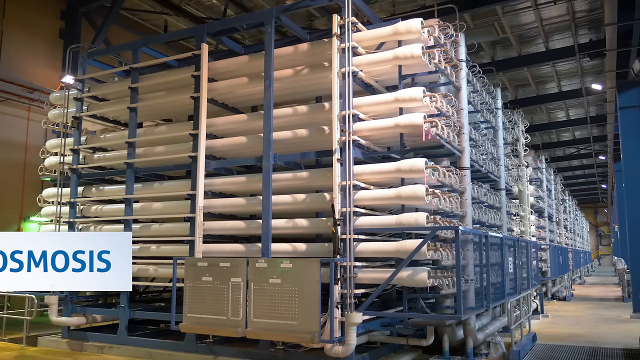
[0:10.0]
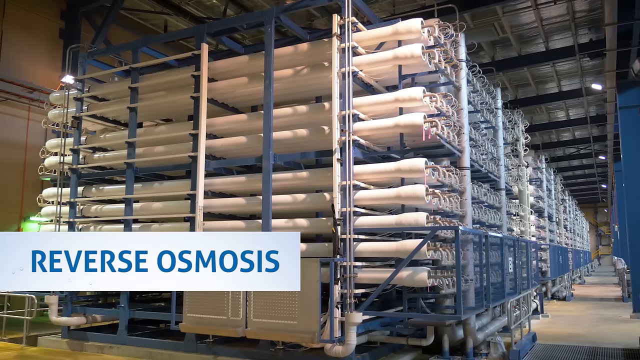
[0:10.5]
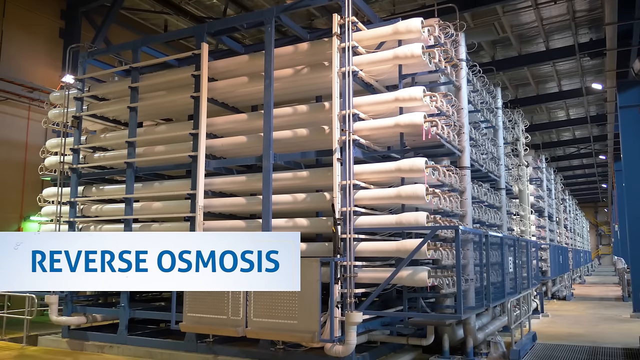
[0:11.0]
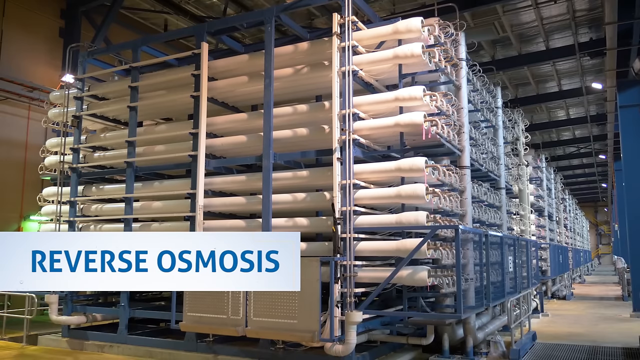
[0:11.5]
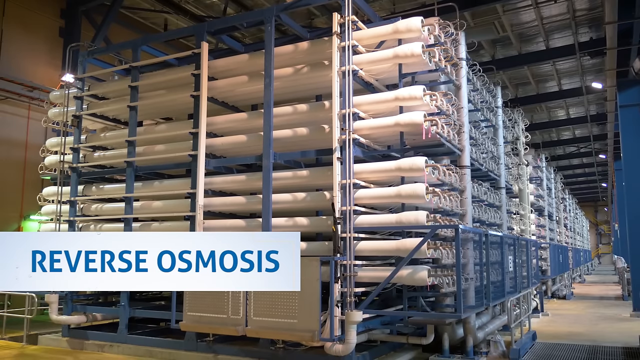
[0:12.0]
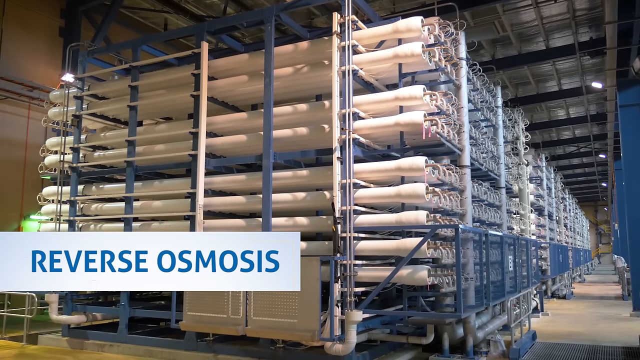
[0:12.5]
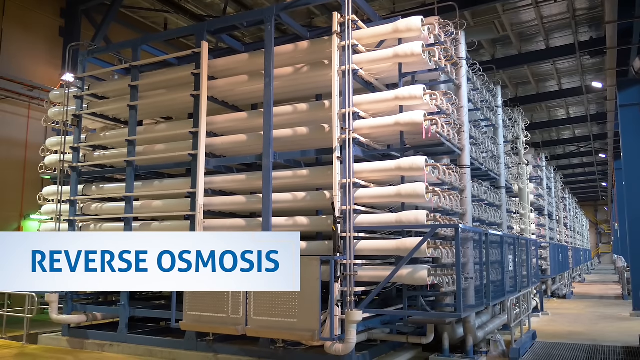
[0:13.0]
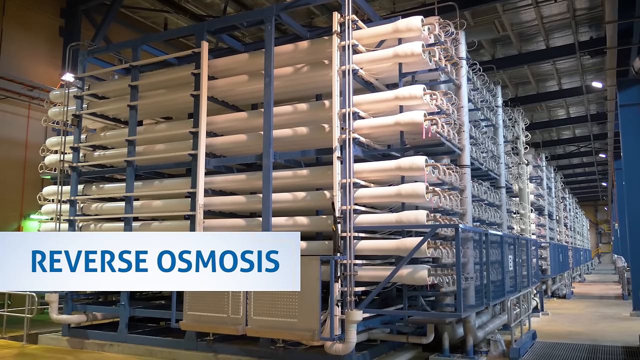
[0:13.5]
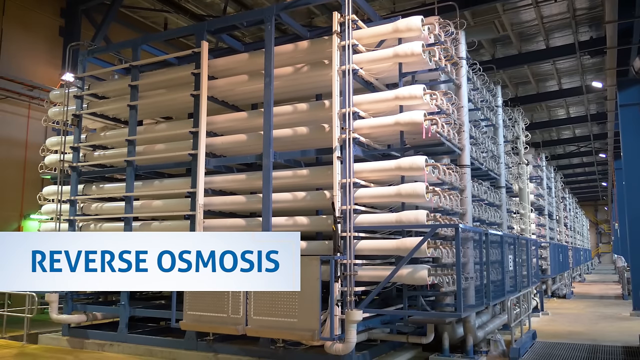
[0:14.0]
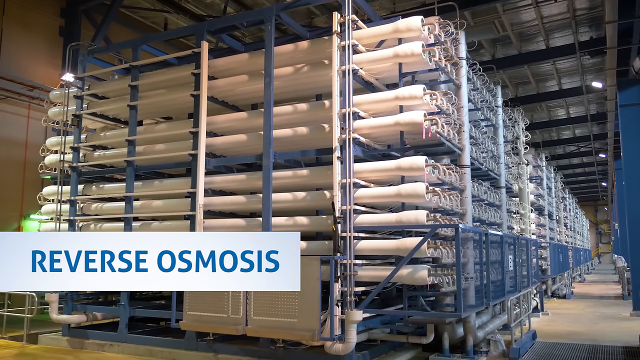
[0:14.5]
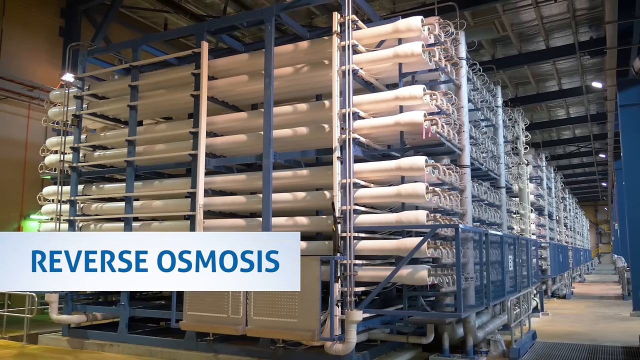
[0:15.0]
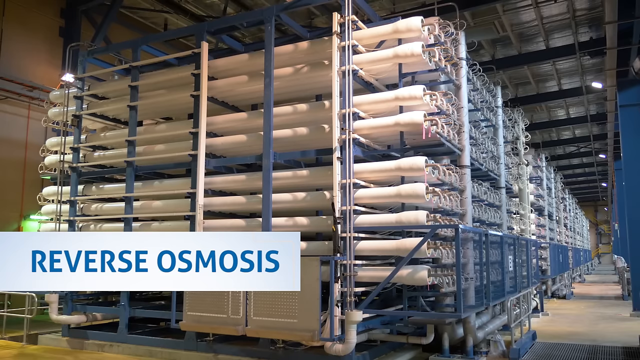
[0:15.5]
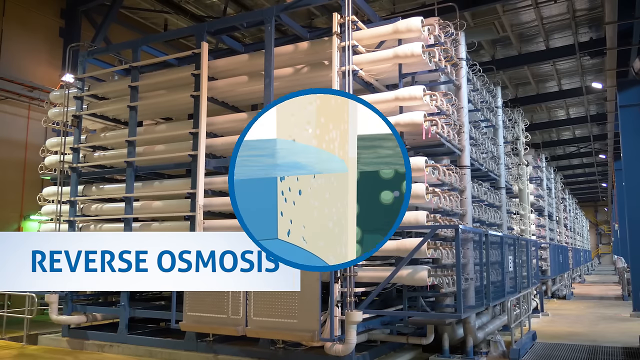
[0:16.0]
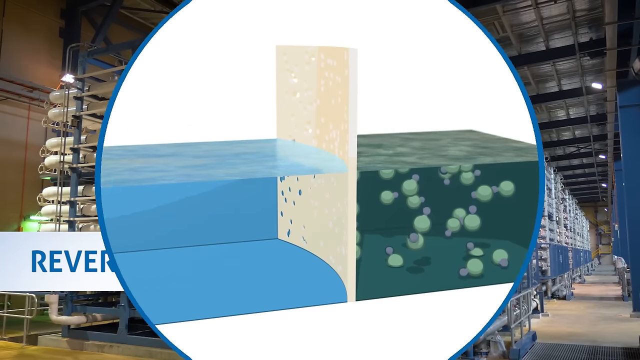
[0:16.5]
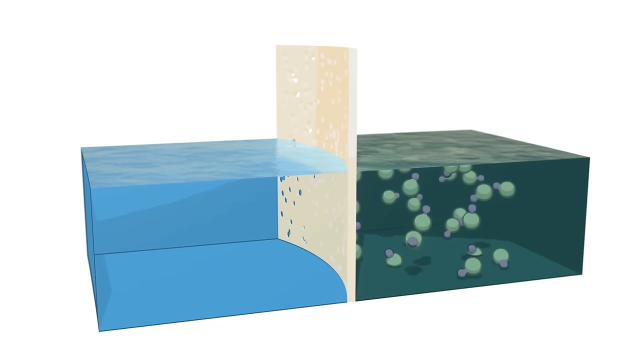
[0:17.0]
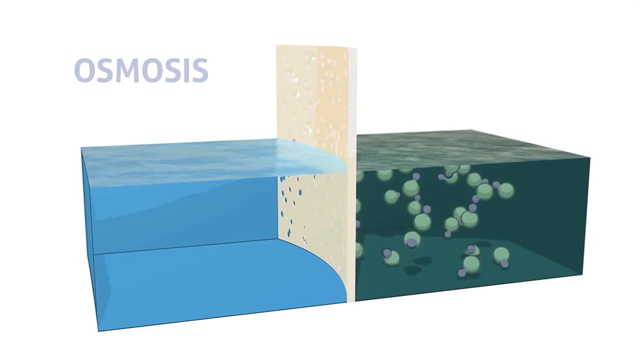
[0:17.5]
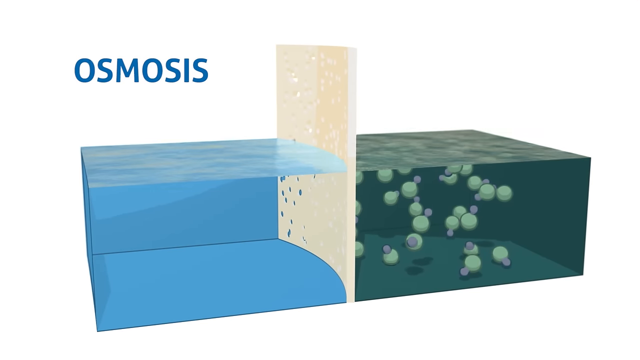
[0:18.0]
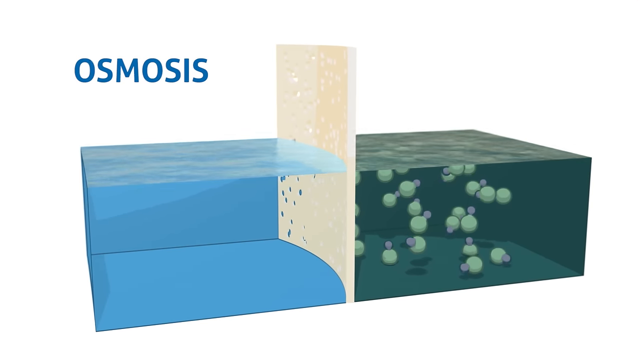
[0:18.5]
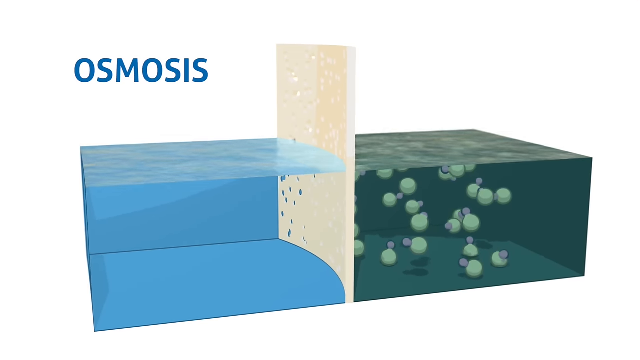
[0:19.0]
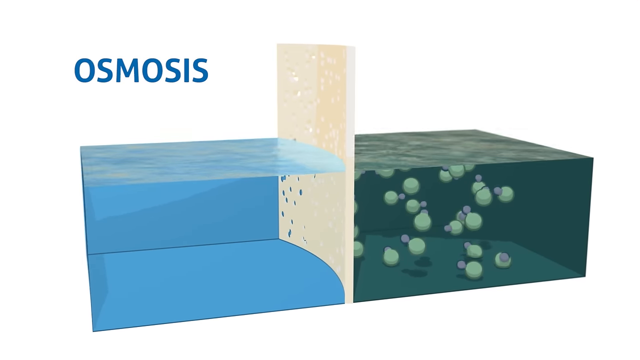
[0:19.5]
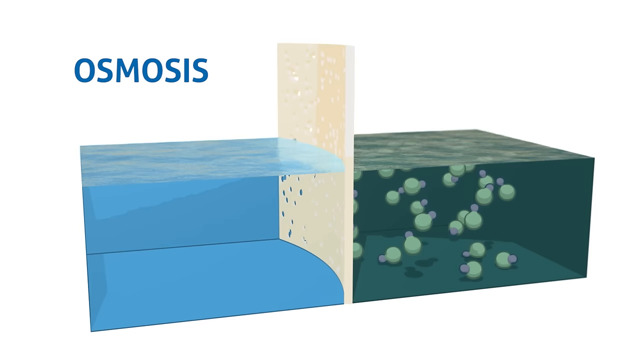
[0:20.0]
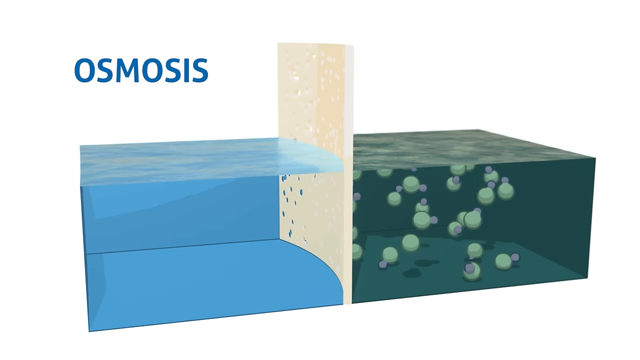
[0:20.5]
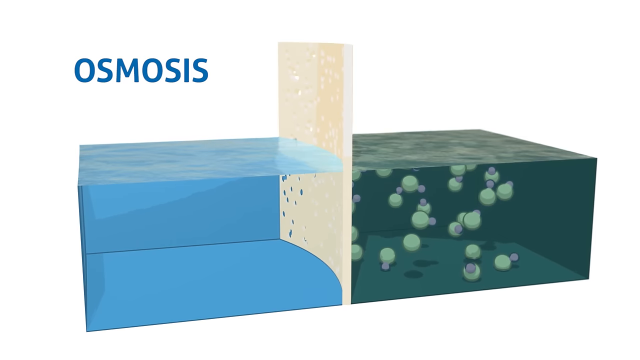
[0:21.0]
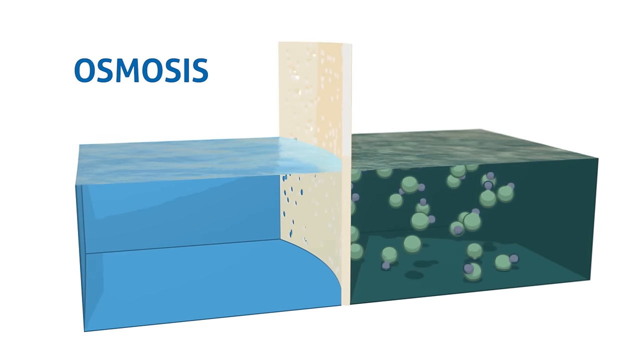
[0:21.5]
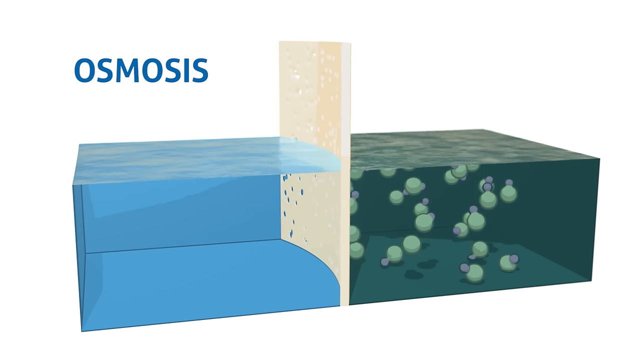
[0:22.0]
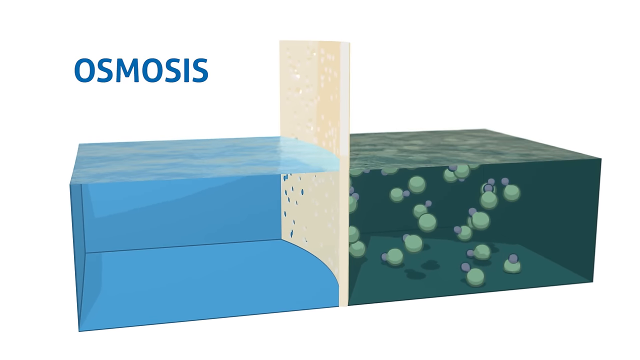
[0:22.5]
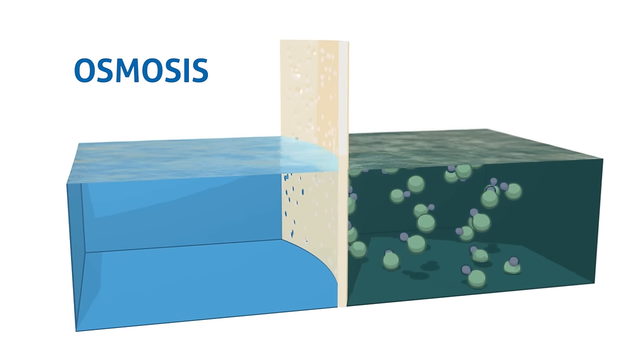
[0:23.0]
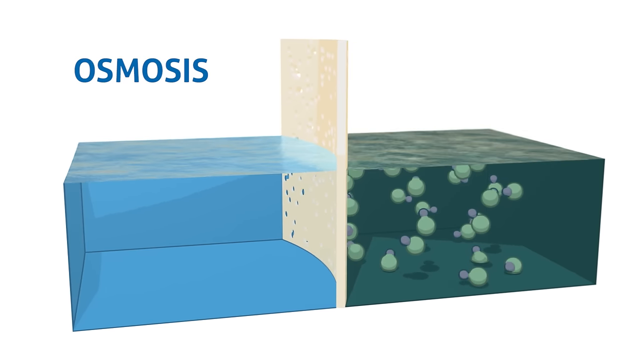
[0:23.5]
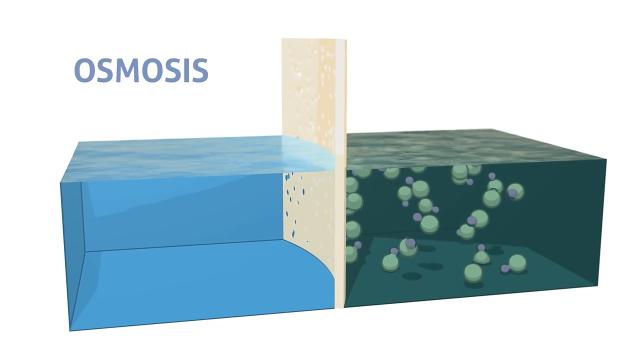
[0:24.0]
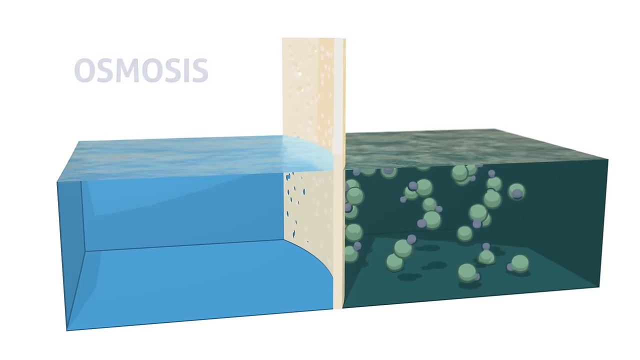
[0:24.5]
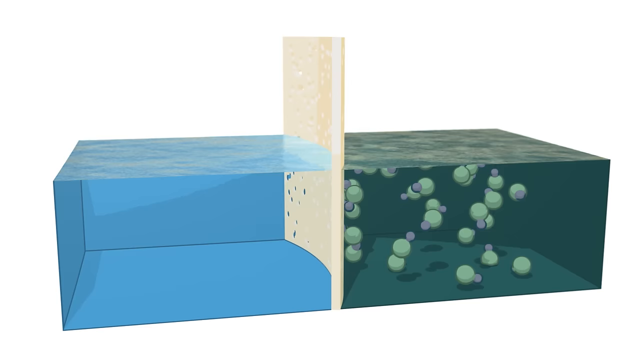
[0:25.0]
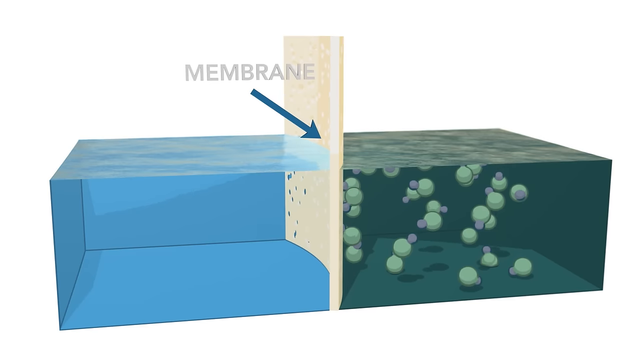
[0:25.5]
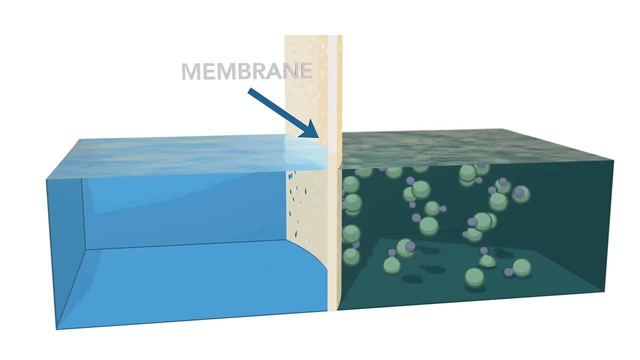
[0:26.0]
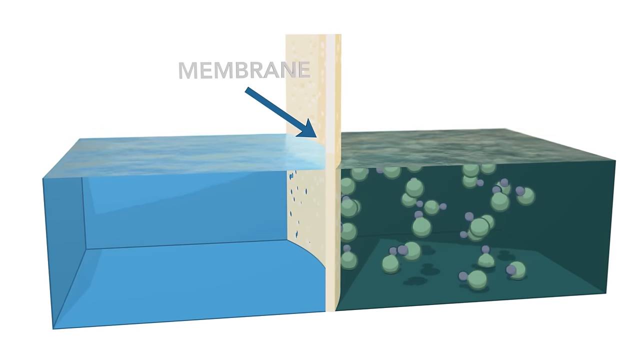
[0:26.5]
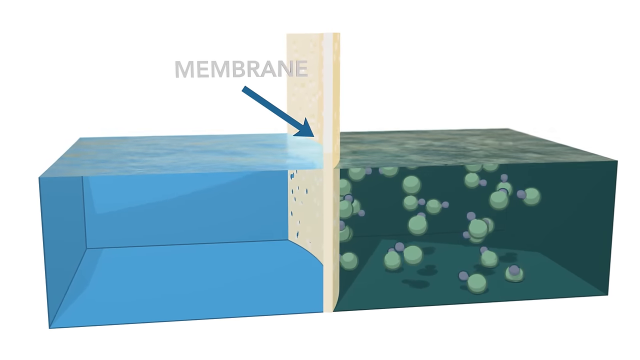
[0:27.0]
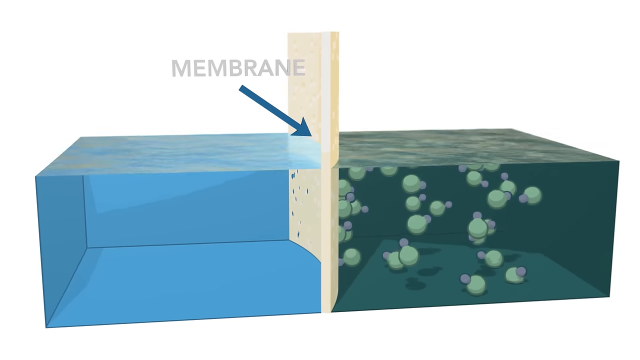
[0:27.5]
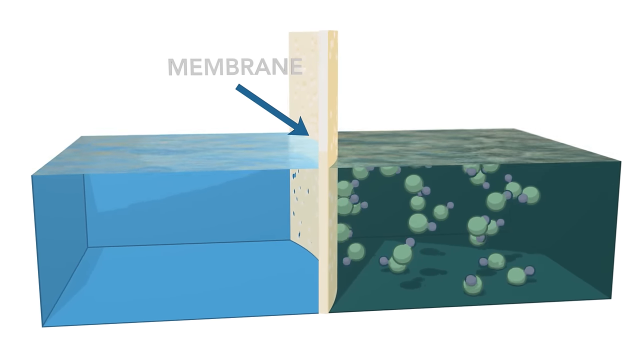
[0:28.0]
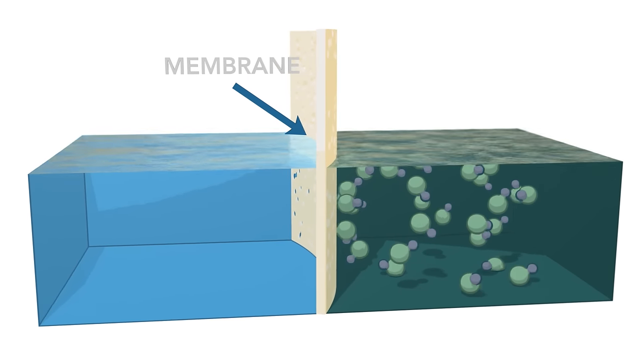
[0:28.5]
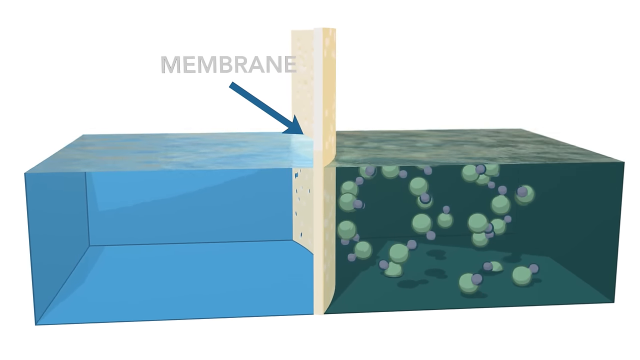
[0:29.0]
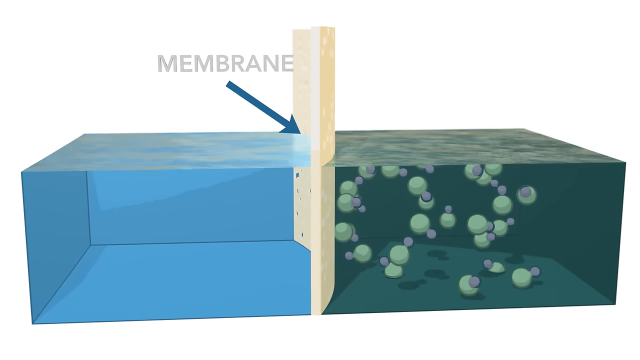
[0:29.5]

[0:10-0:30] The reverse osmosis facility is shown from the inside: a large warehouse with long white pipe-shaped objects stacked on top of one another. Toward the middle there is a transition to a graphic of the osmosis process that labels some of its actions and objects. Blue water is on the left of a yellow membrane, and greenish water with green circles floating in it is on the other side. At the top left of the graphic, large blue text reads "osmosis". That text then disappears and the membrane is labeled with text instead.